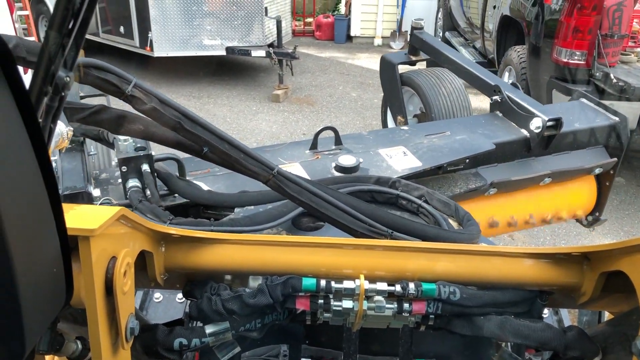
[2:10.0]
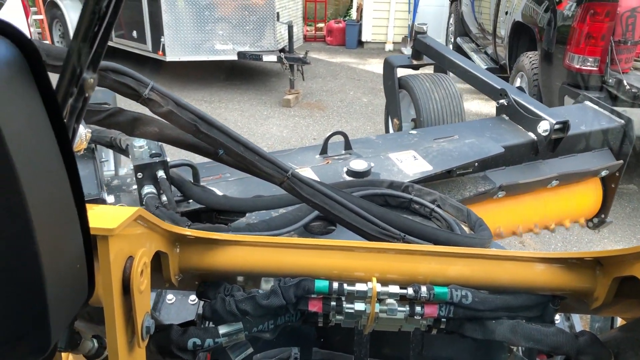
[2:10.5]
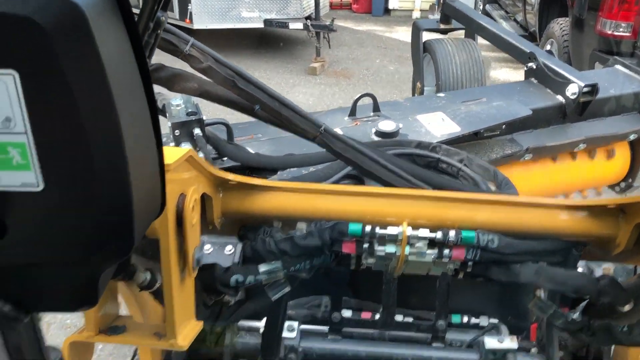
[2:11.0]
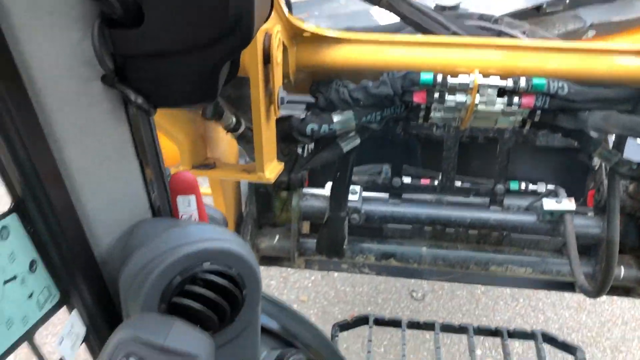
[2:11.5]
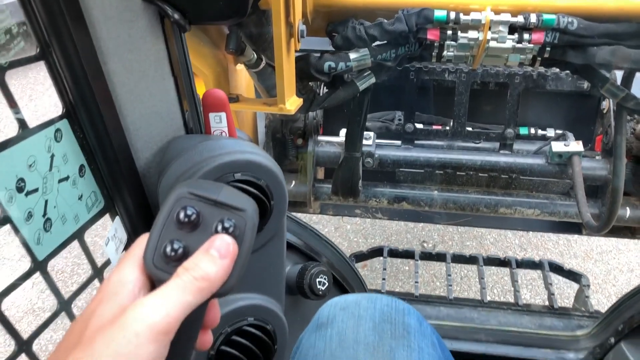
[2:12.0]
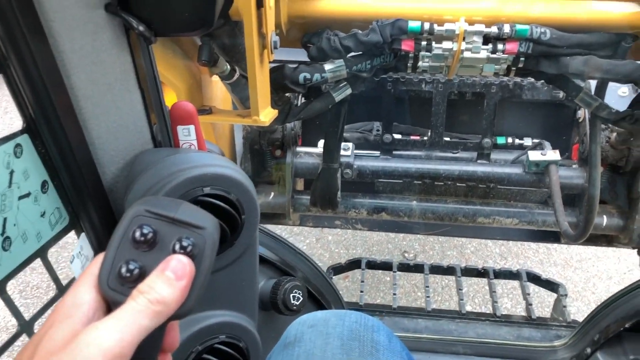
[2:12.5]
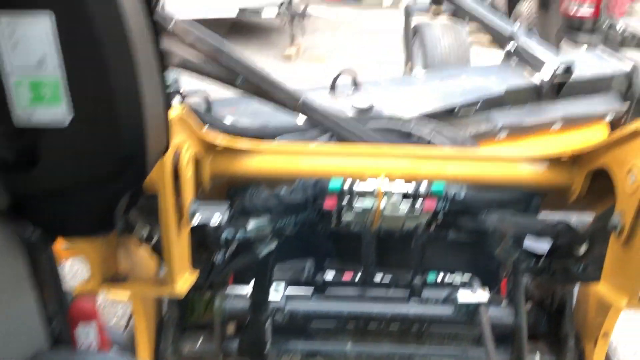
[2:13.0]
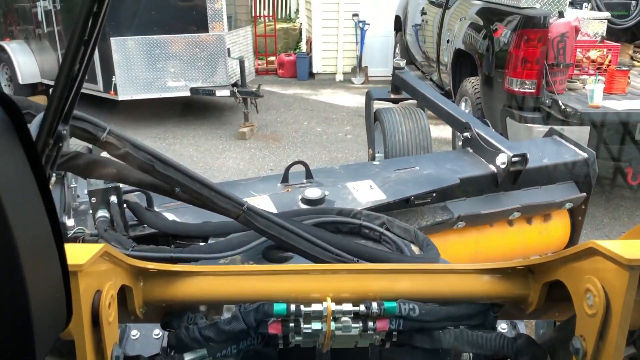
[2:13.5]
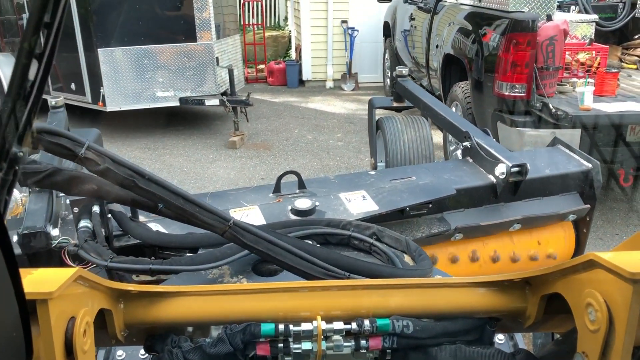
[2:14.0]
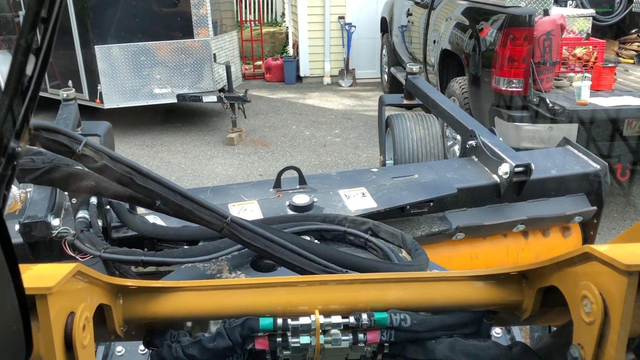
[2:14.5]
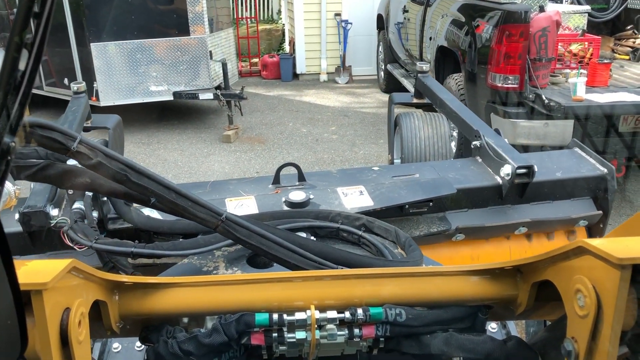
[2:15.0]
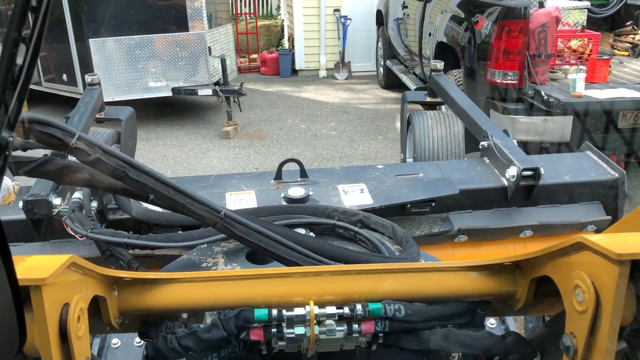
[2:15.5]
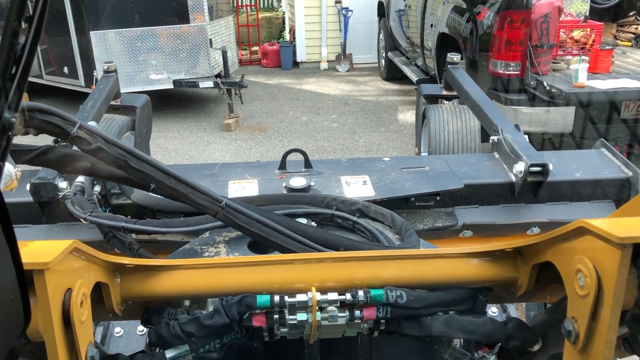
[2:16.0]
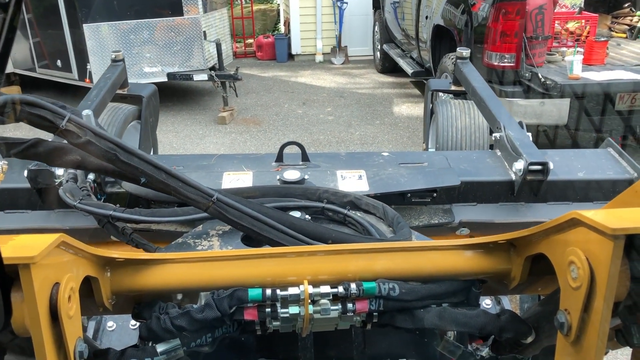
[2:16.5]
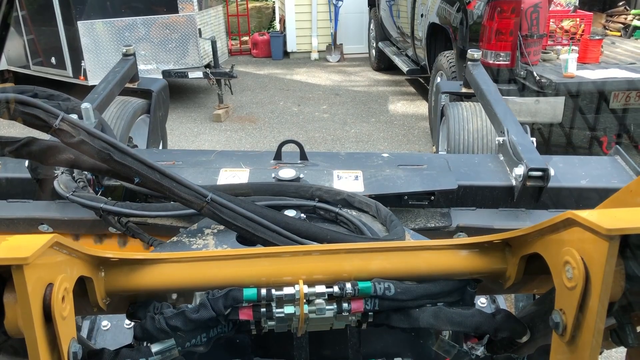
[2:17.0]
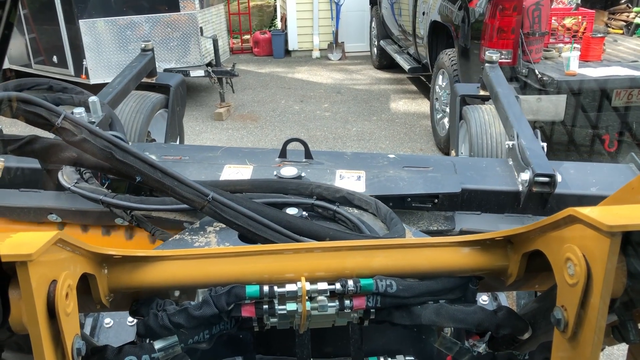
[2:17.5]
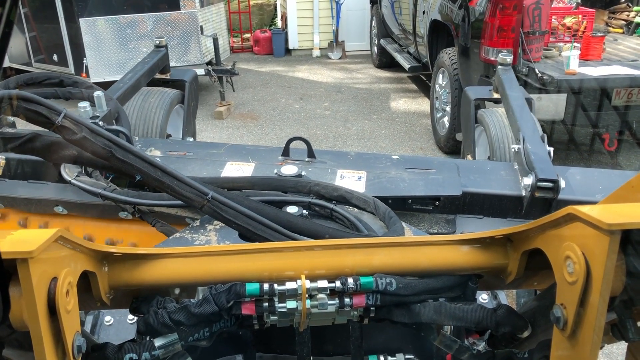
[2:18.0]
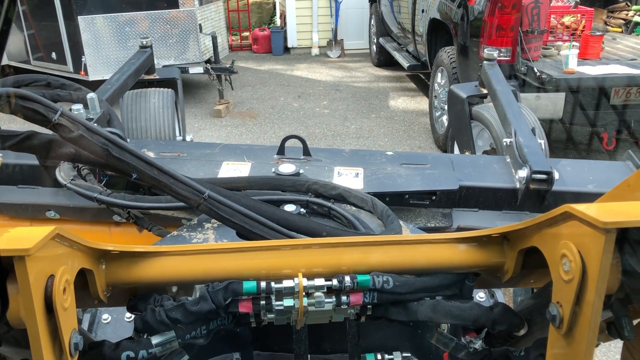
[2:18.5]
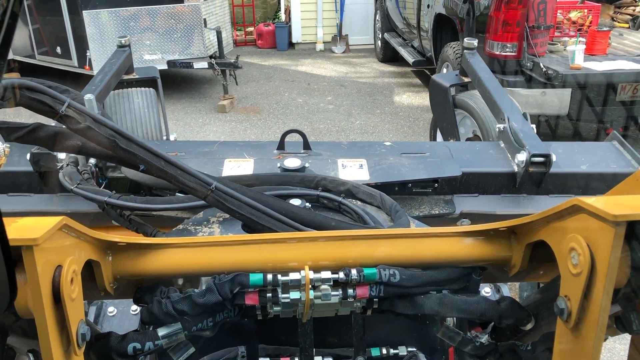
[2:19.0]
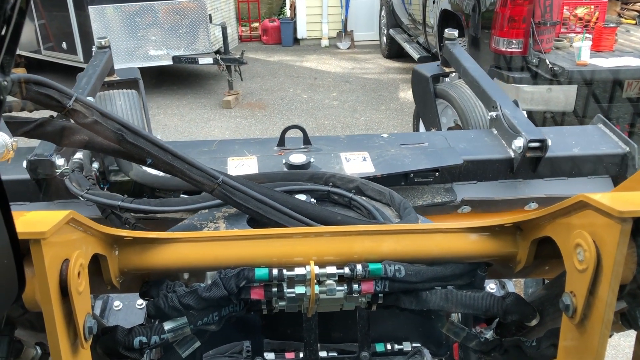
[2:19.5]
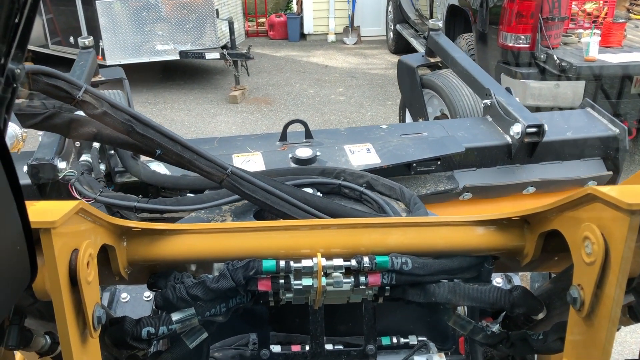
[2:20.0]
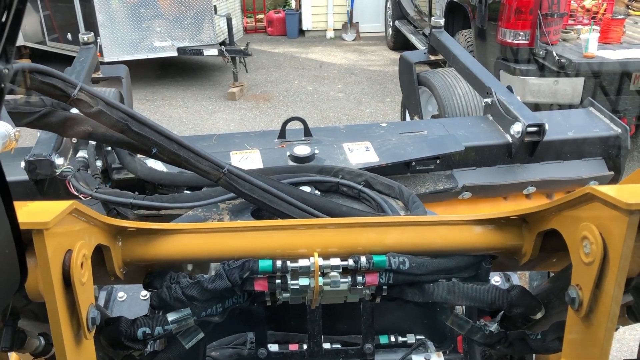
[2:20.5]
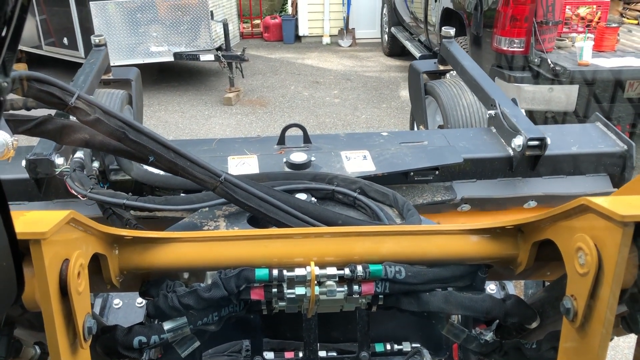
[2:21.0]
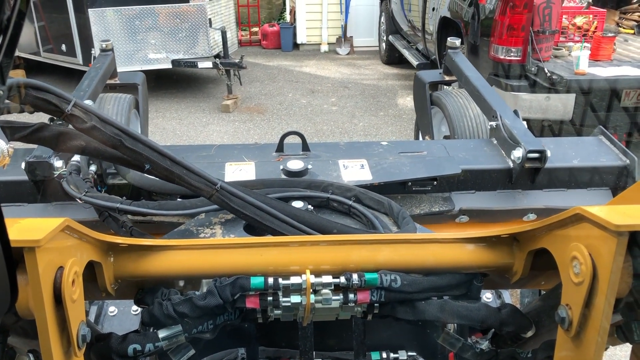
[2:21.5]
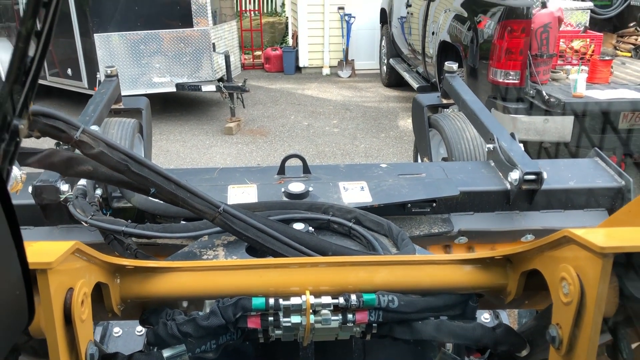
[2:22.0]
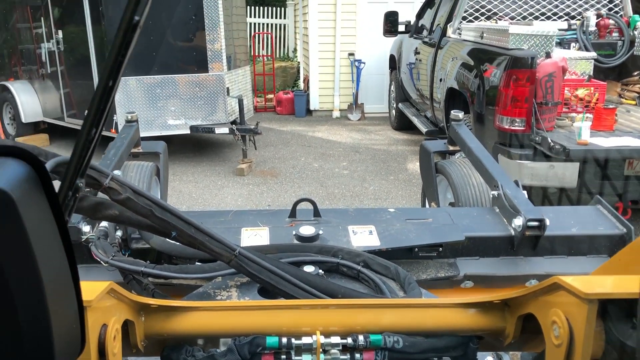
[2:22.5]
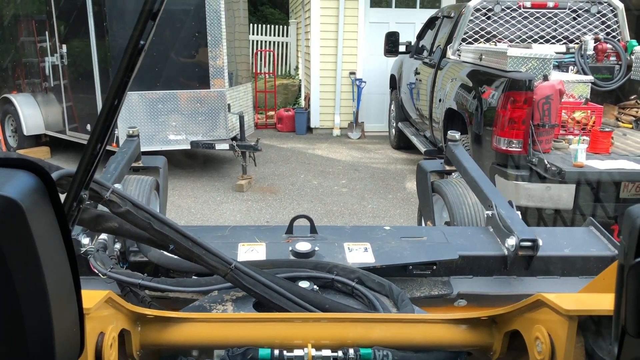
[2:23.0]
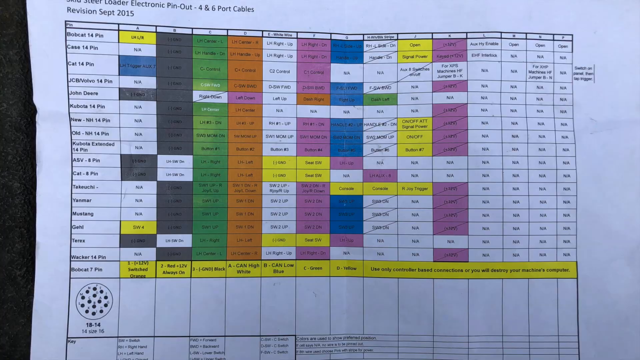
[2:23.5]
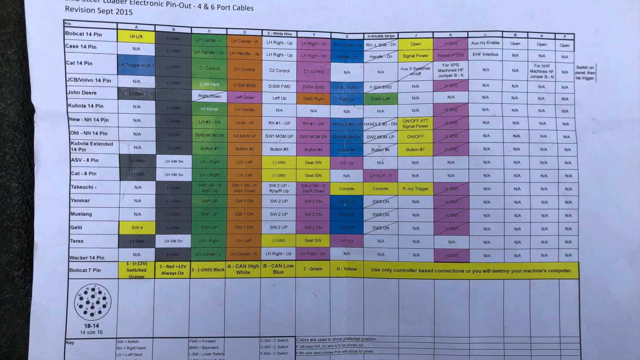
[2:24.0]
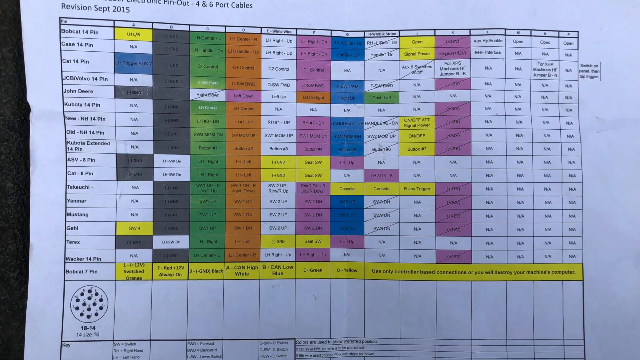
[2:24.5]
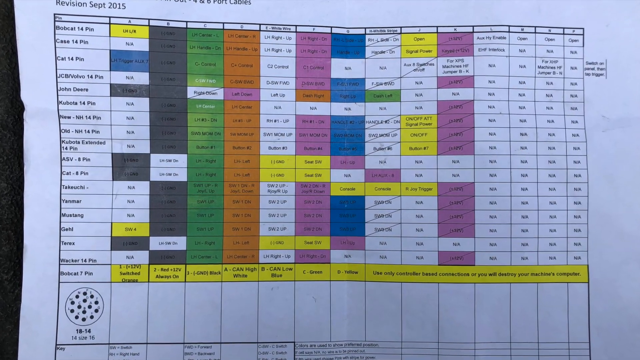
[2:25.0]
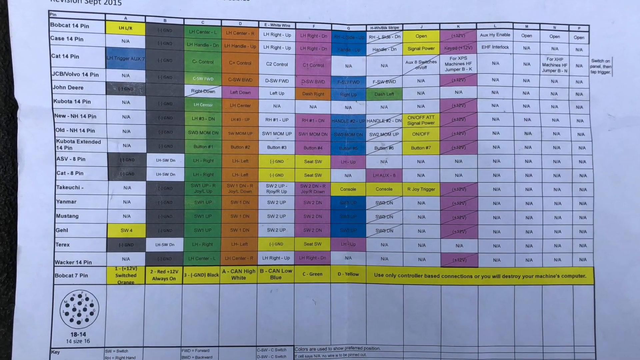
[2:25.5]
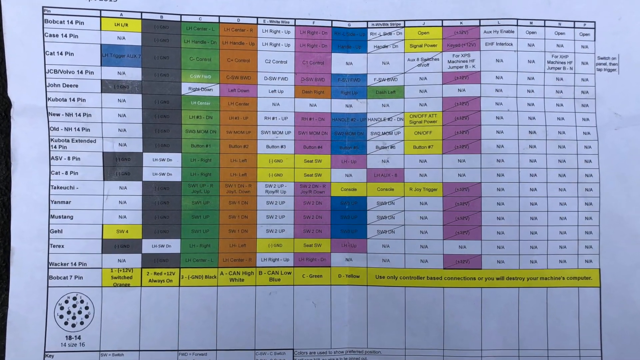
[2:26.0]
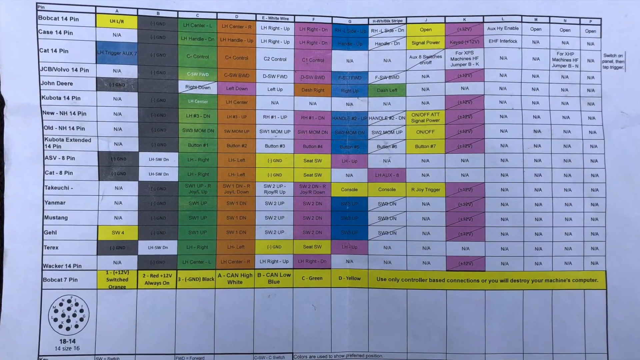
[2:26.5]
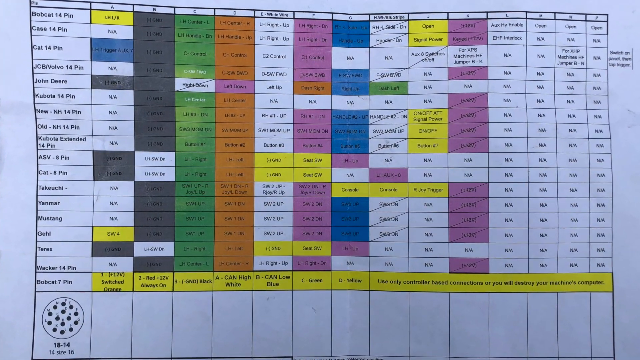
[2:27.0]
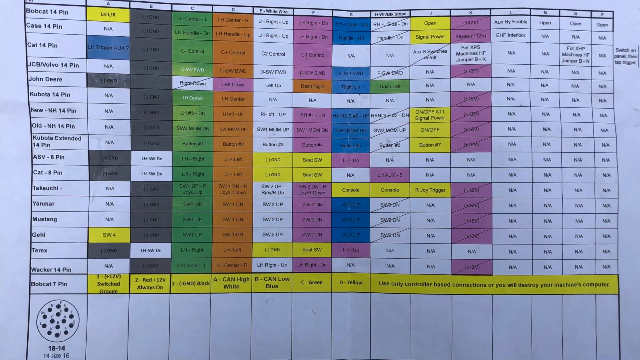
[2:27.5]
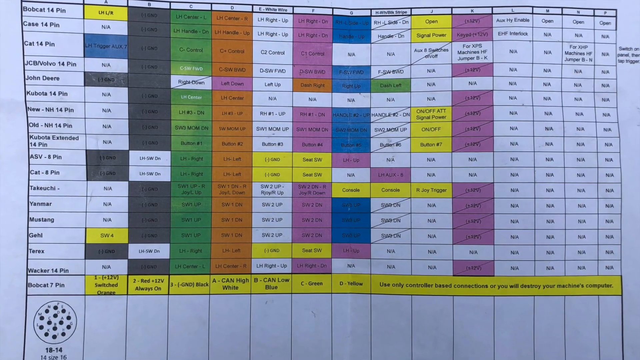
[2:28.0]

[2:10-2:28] A man demonstrates how the machine works, using his left hand to control the front wheel of the vehicle, and the vehicle moves from one direction to the other in response. The machine moves from point A to point B. The control system is also displayed on a screen, showing a detailed report in different colors: green, purple, white and blue.